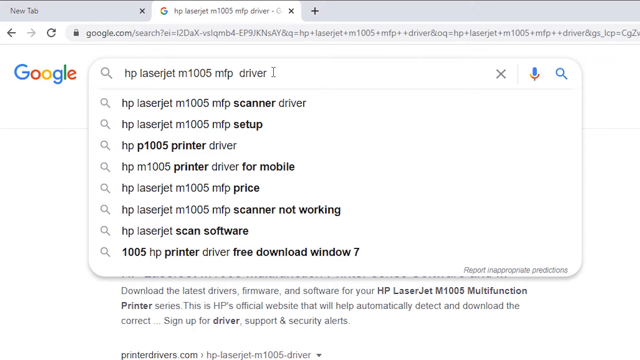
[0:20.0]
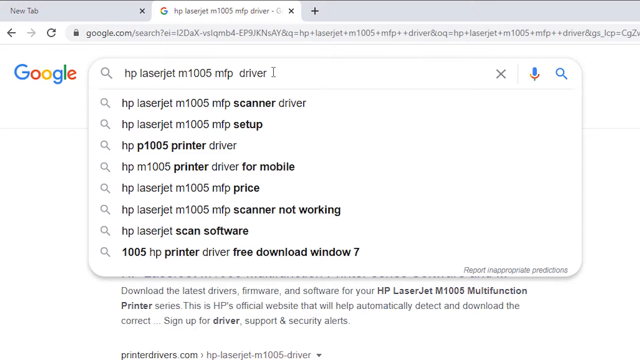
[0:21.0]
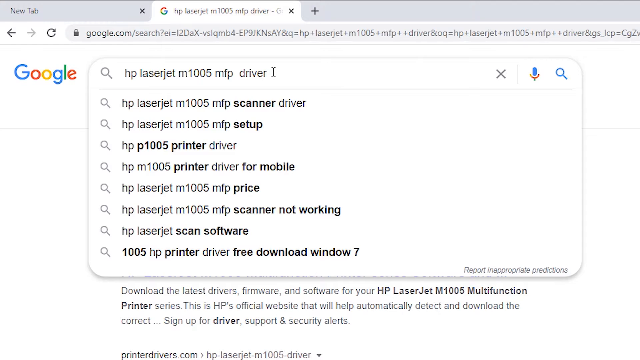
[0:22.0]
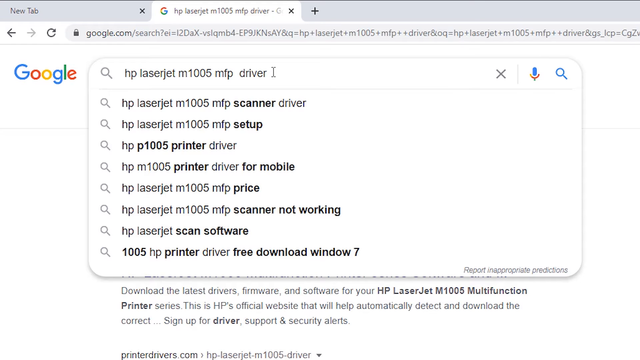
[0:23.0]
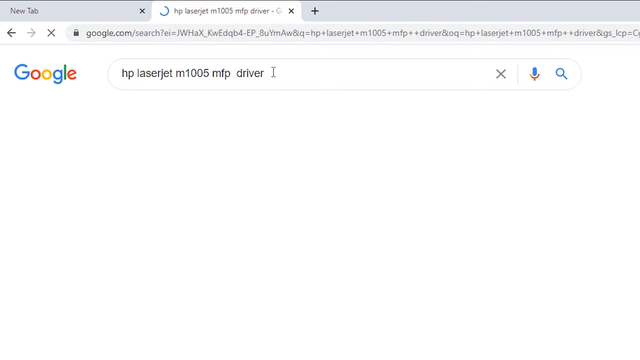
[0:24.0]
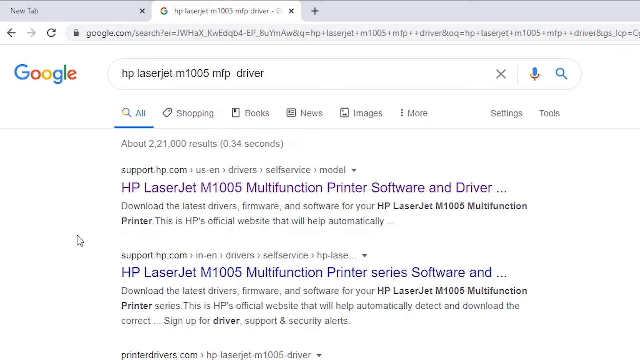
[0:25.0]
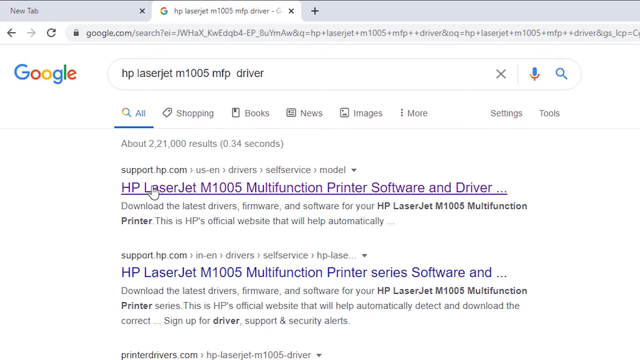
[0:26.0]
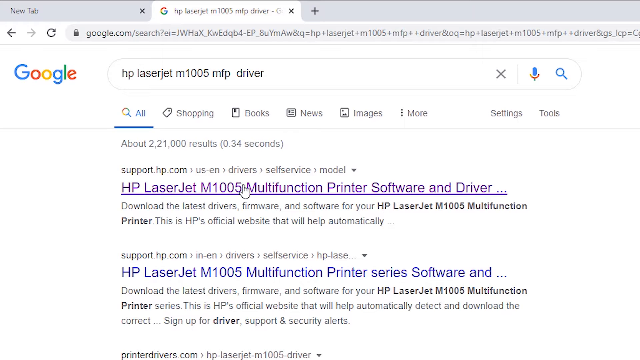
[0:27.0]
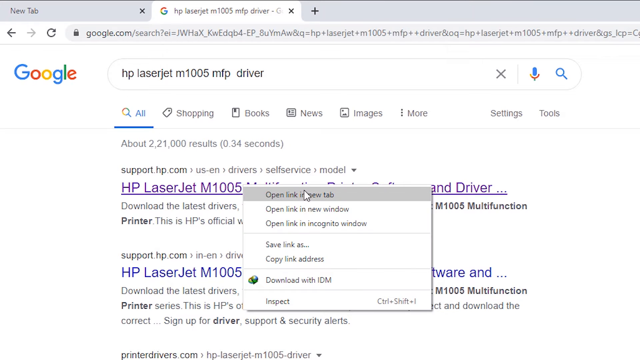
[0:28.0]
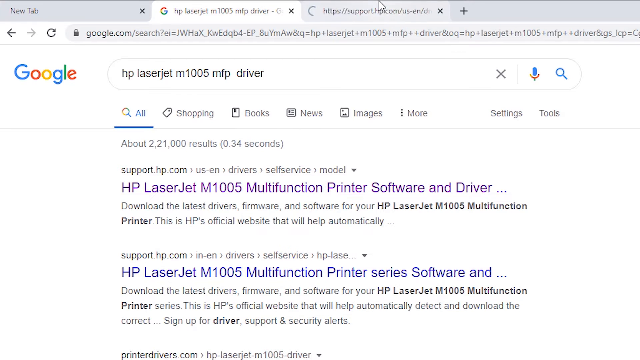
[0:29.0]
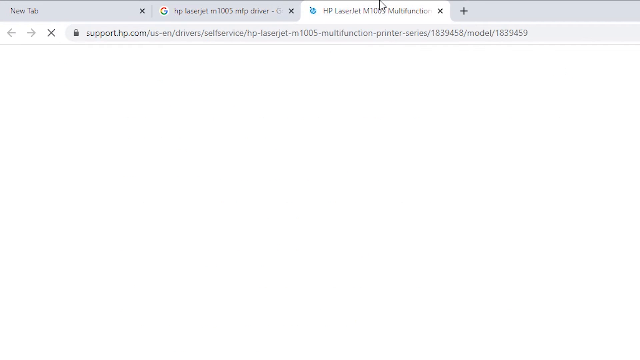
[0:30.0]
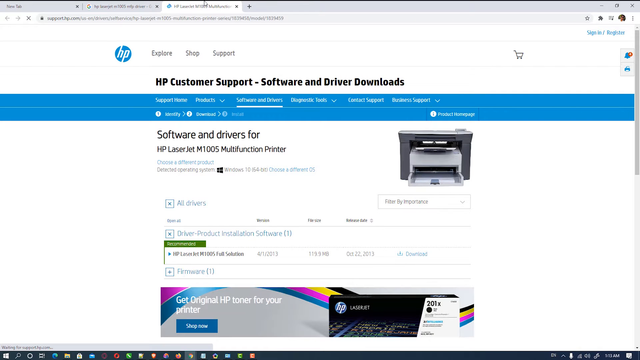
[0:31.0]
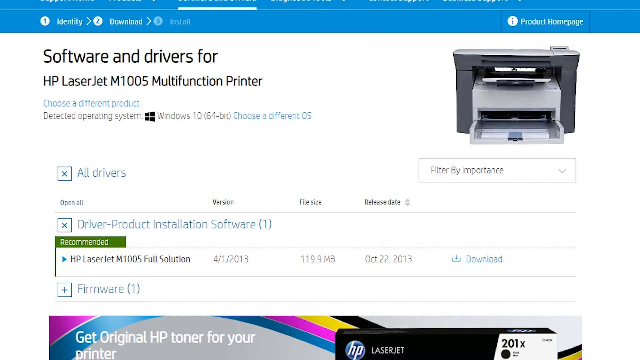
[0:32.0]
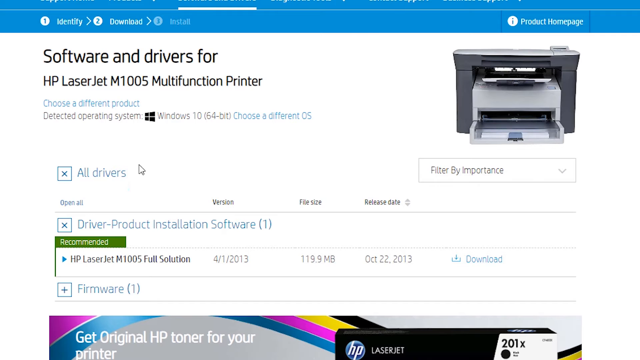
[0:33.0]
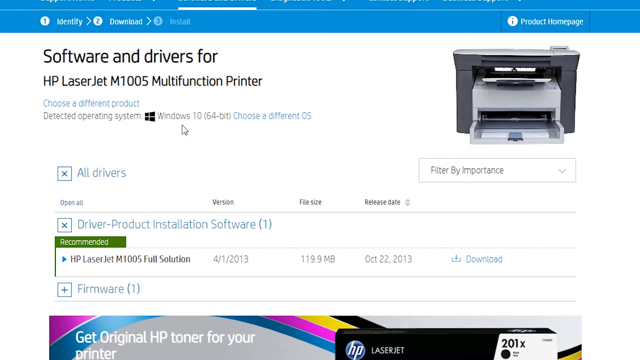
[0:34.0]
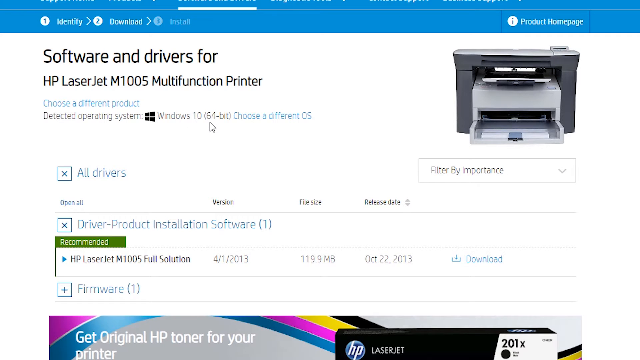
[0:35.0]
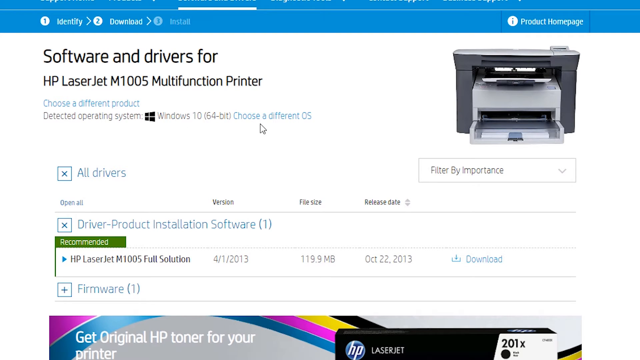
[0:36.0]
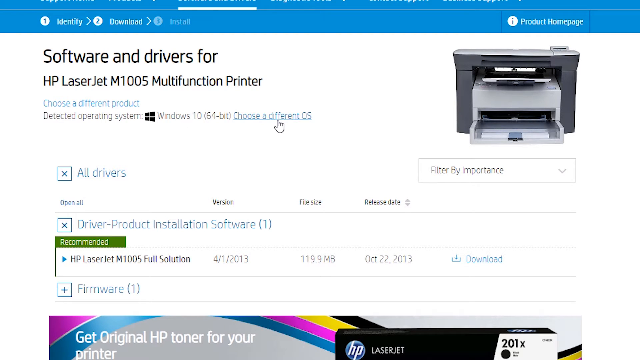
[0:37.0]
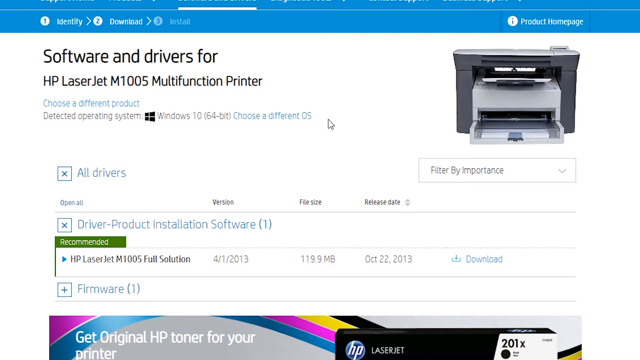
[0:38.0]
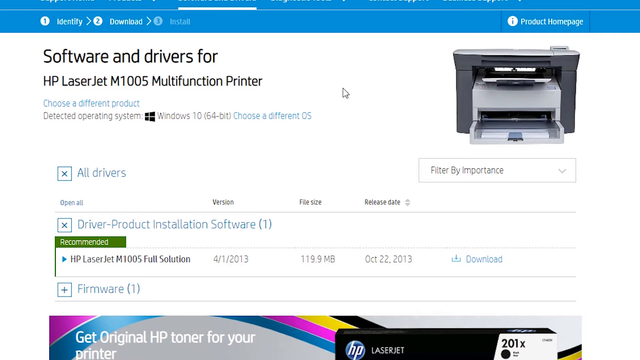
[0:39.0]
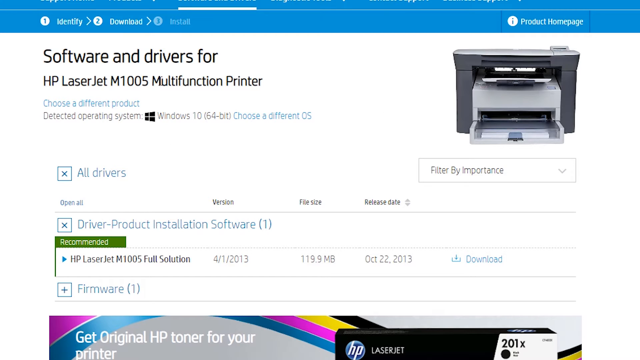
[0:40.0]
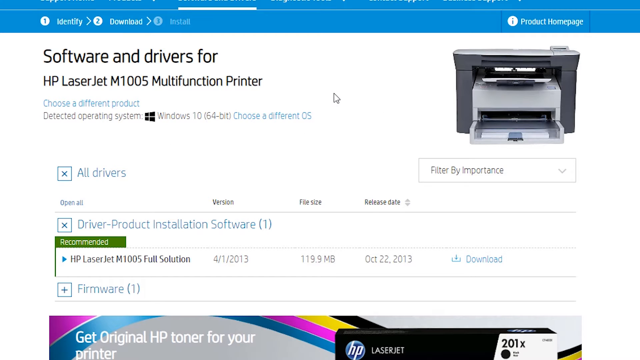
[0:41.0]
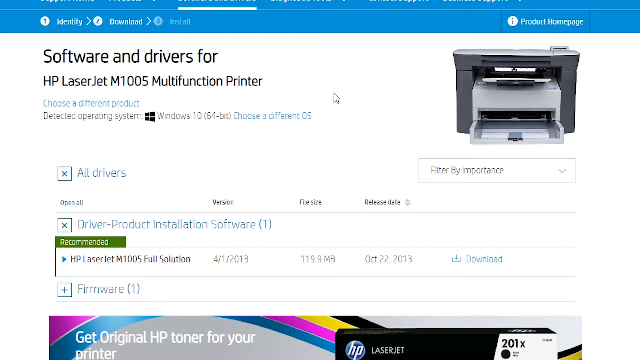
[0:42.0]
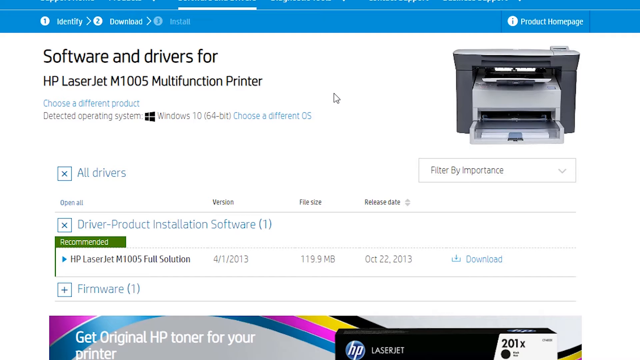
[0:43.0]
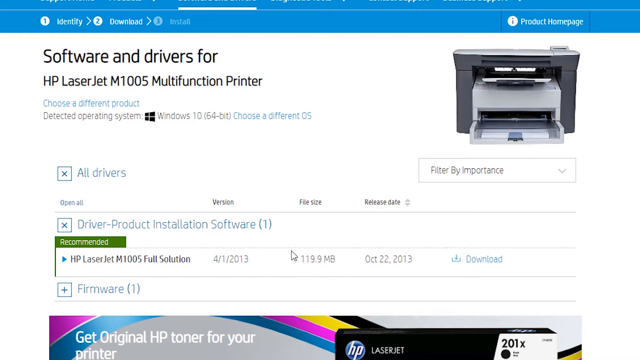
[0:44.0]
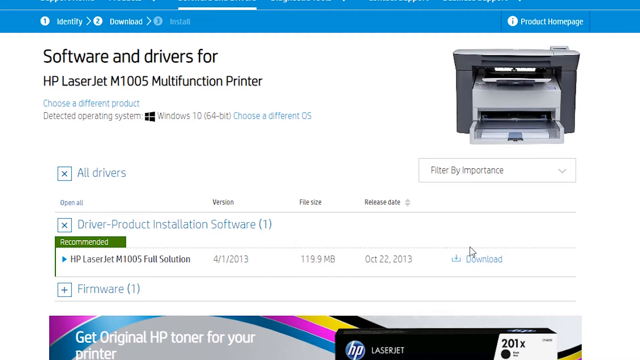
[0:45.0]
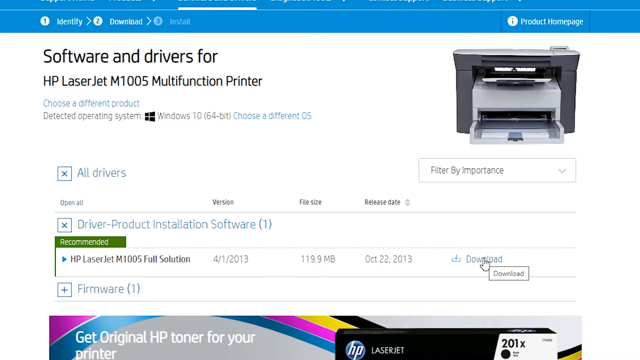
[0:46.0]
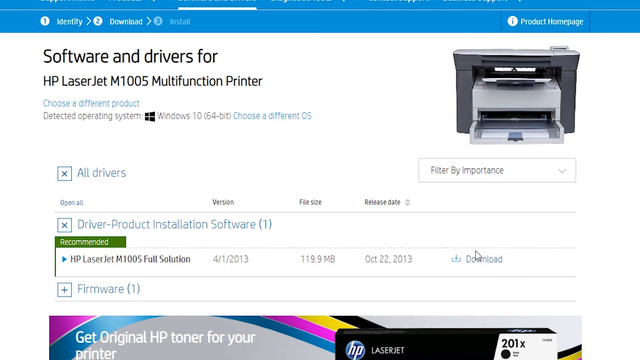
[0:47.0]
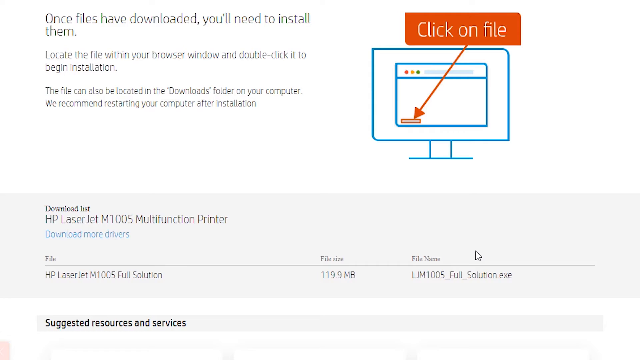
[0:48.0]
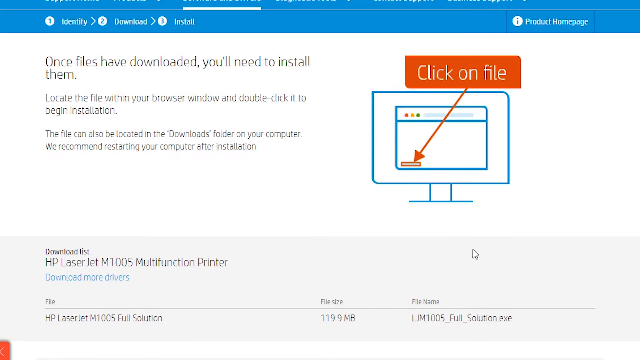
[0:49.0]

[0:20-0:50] The video, a little wider than it is tall, shows someone's desktop within Google Chrome, apparently on the second tab. The top shows Google, with a search for "hp laserjet m1005 mfp driver". The search box is clicked and Google suggestions drop down on the screen. The suggestions are dismissed, the cursor arrows over the first result, right-clicks it, opens it in a new tab and switches to that tab. The view then zooms in on the web page, cutting off the top where the web address is shown. The page appears to be HP's own website. Under the menus at the top it says "software and drivers for hp laserjet m1005 multifunction printer", and below that it says "detected" with a Windows icon and "windows 10 64-bit", along with a link to choose a different operating system. The cursor arrows over that link and circles it.